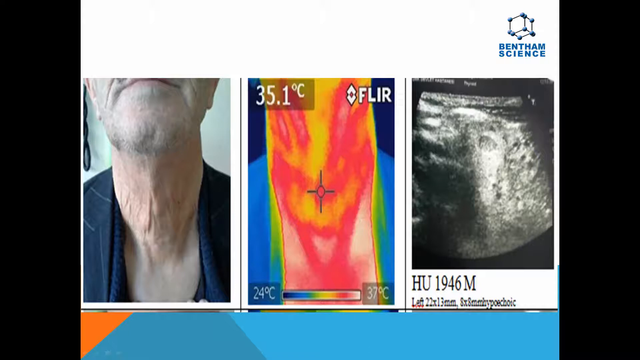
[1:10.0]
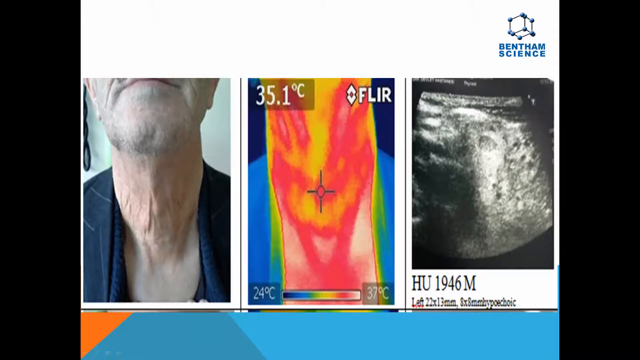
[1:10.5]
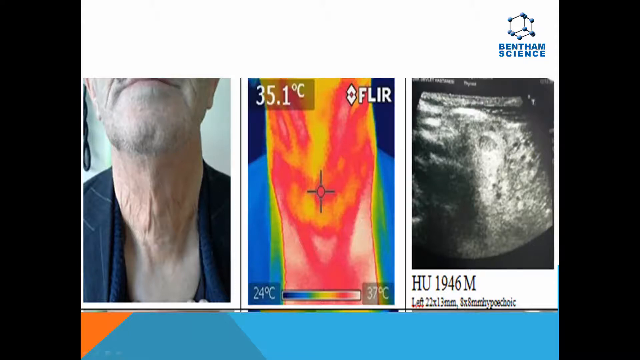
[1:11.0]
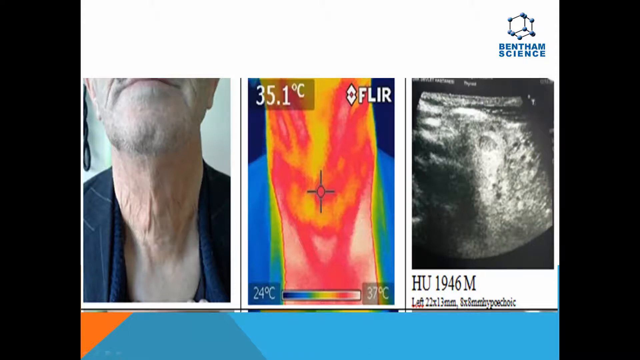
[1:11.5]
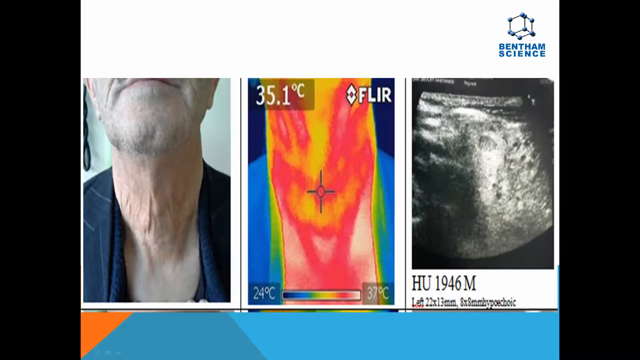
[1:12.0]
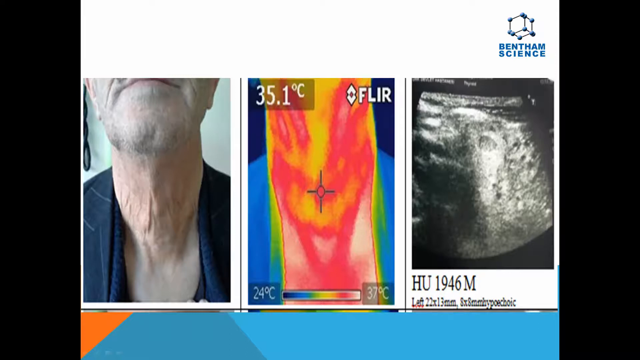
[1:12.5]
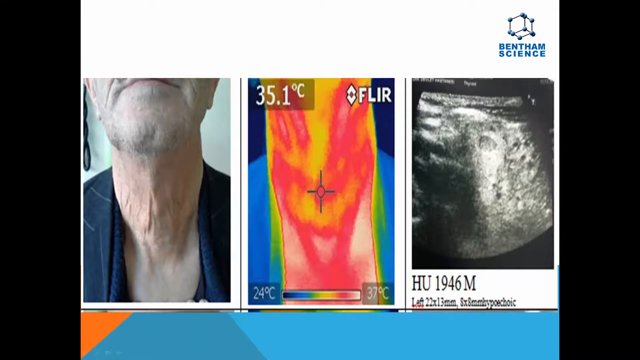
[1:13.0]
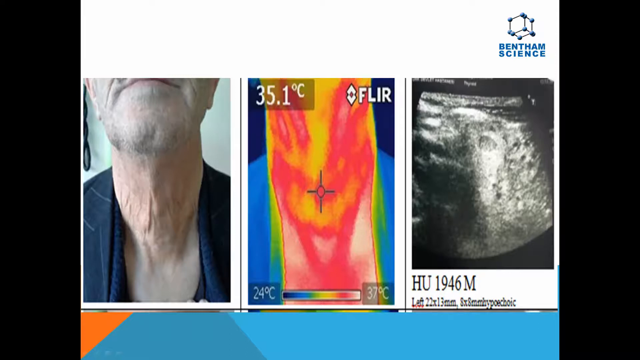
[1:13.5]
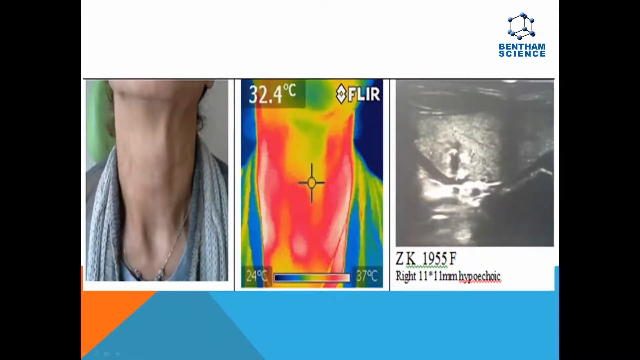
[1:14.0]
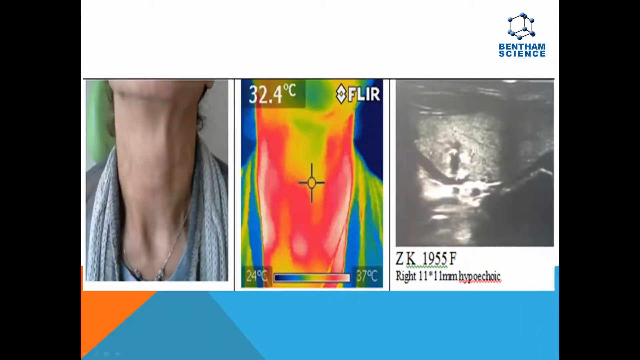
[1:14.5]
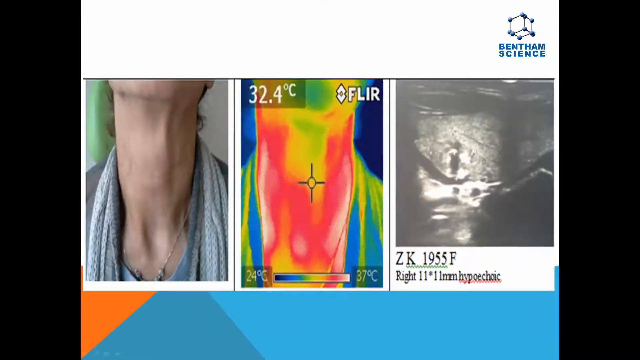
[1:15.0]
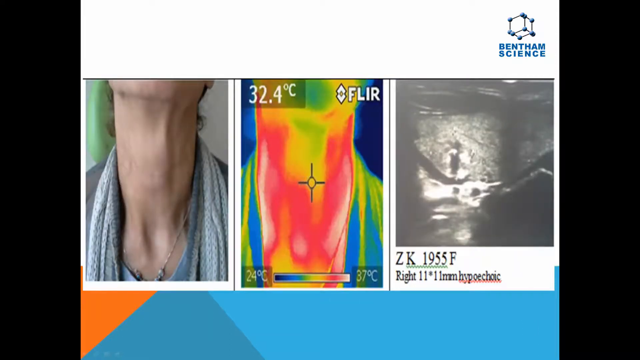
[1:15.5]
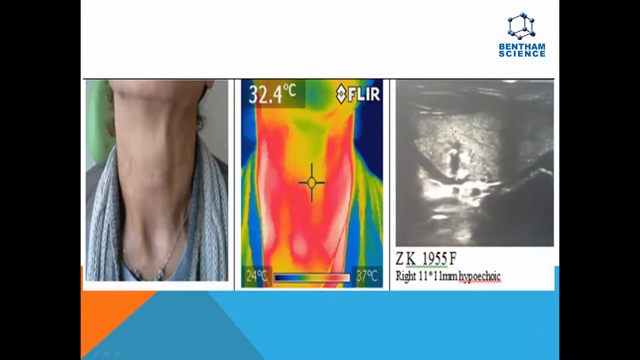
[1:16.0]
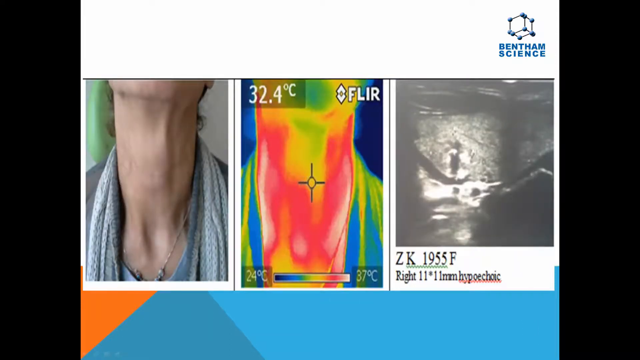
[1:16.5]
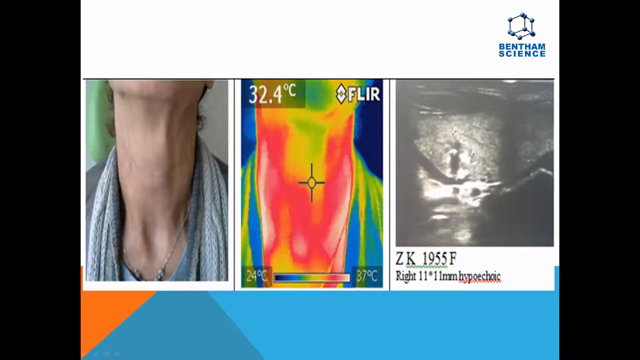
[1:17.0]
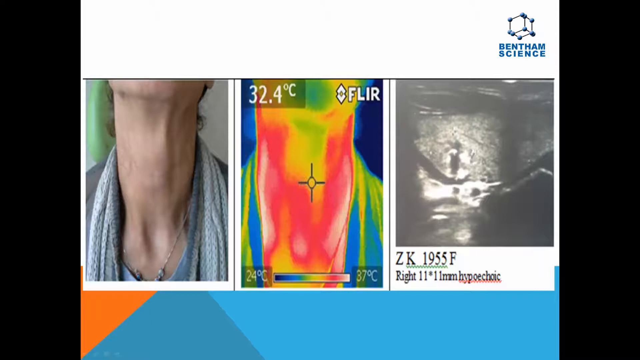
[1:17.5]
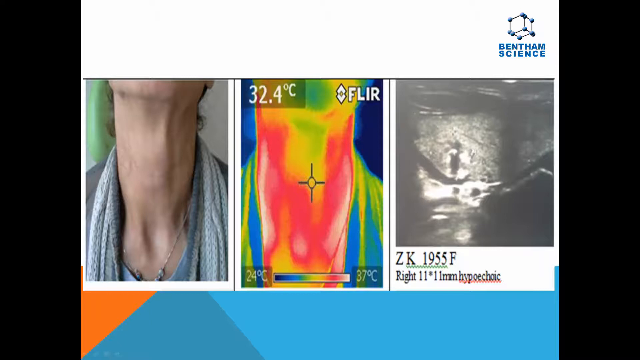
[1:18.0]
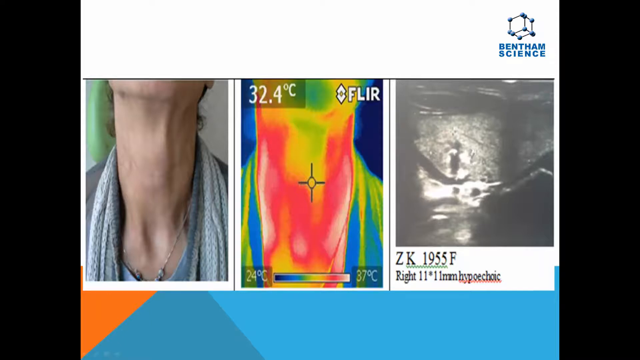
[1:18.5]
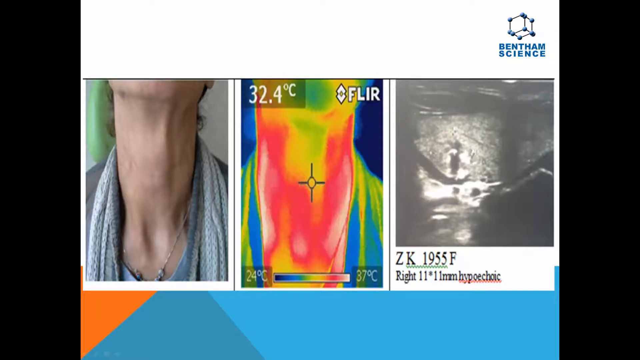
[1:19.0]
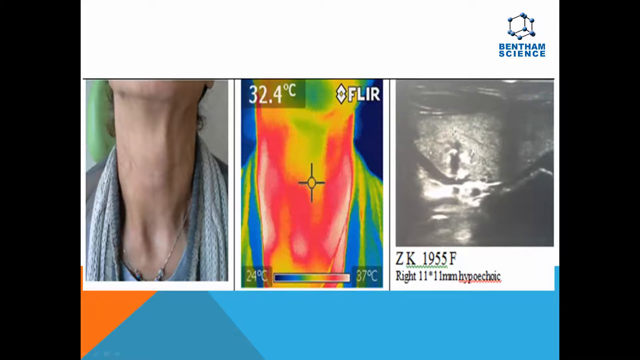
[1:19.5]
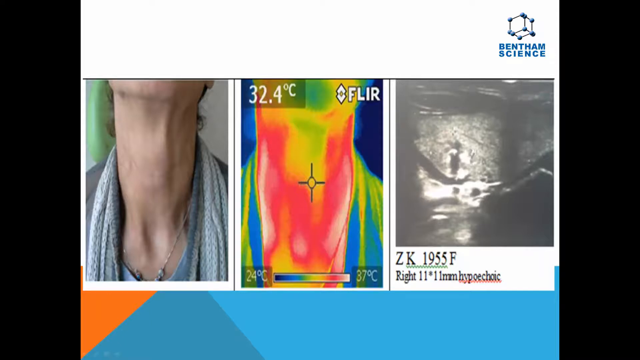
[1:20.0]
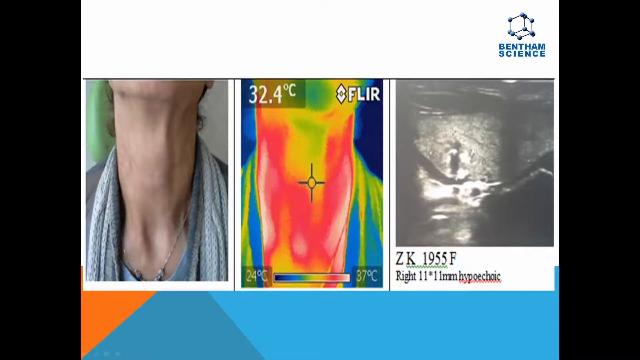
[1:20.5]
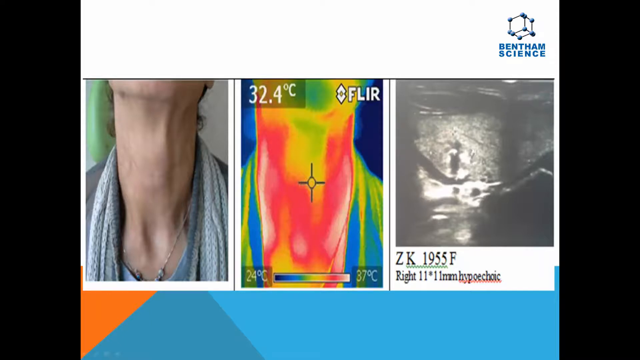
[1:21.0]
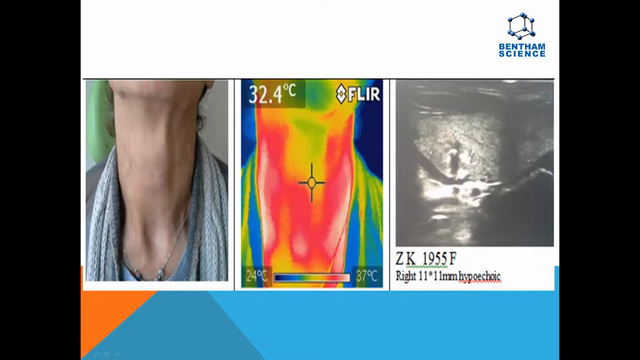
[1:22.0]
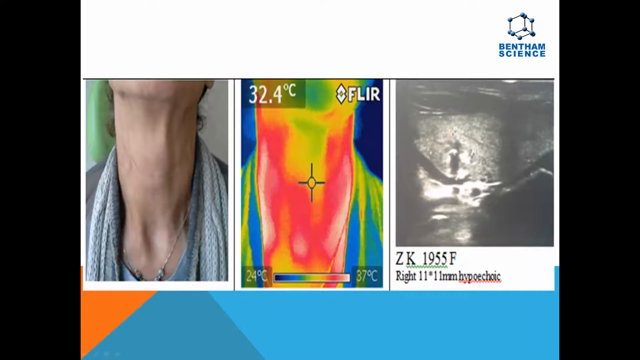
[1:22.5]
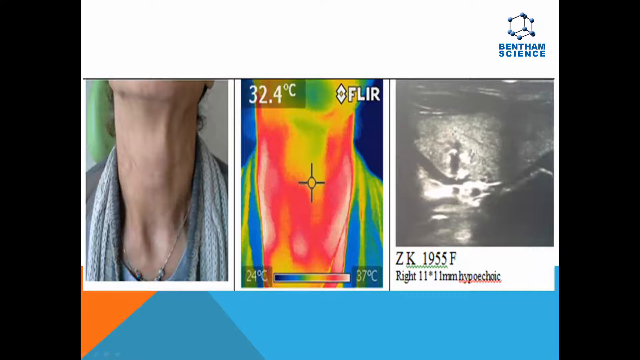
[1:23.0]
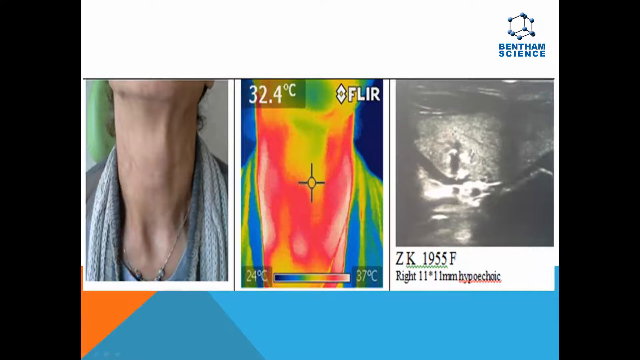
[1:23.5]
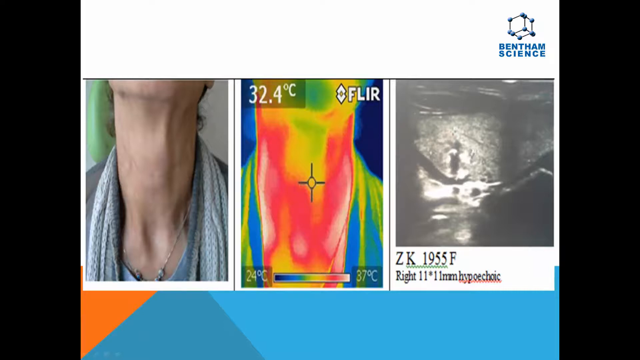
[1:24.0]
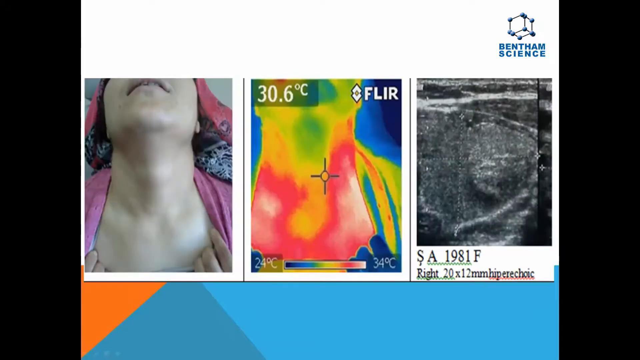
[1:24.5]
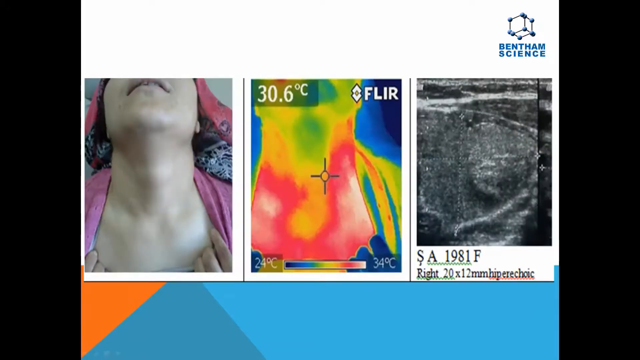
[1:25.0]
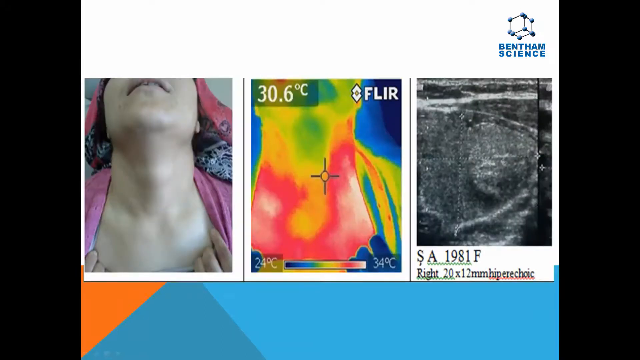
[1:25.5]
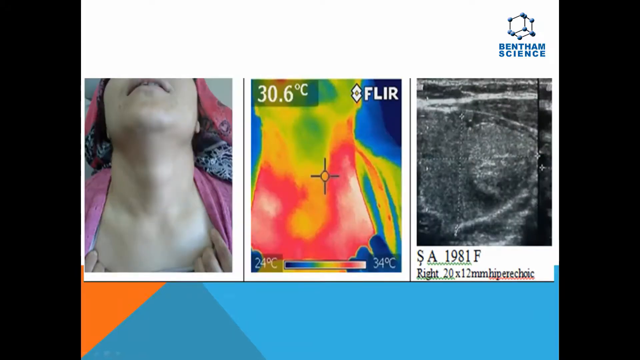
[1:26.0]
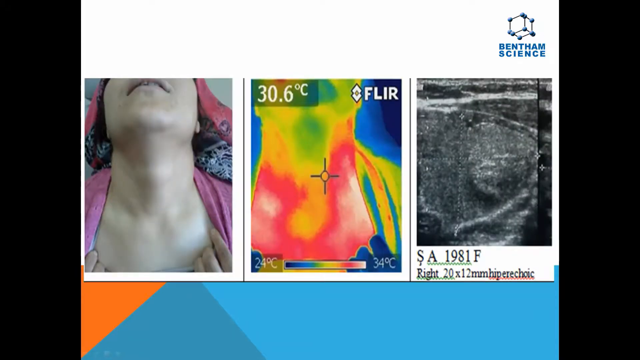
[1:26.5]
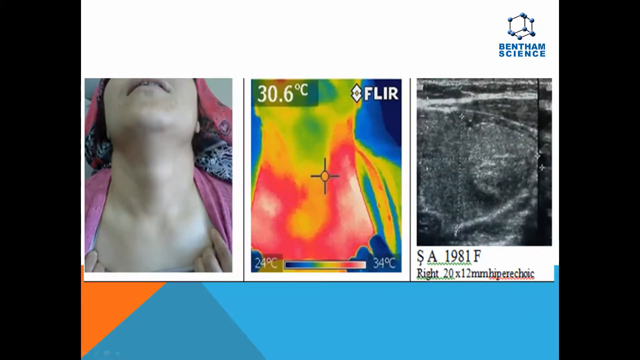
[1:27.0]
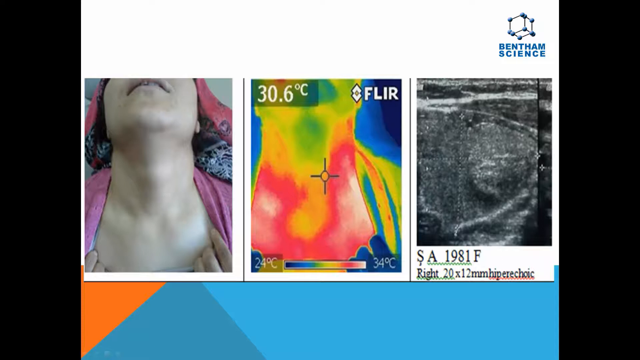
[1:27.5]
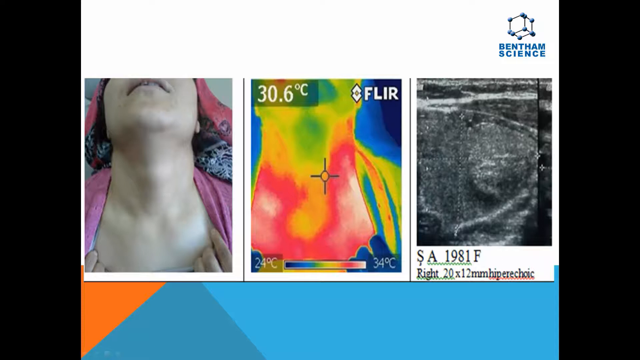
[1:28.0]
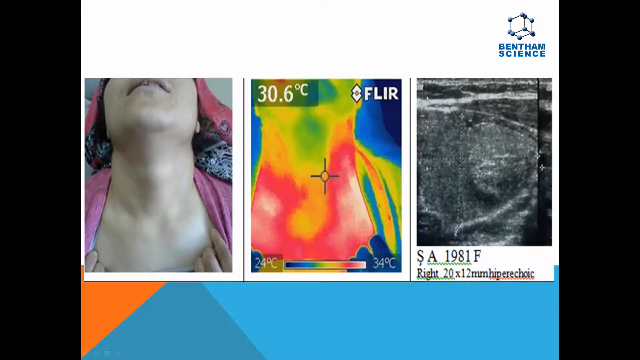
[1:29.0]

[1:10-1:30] Three side-by-side pictures show a man from his lips down to his upper chest, wearing a black suit jacket, with his neck in the center of the photo; to the right is an infrared version of the left picture, and further right a hazy black and white sonogram of the same view. In the upper right of the screen is a 3D cube with little balls on each corner, above the words "Bentham Science". The pictures are on a white background above a mostly blue rectangle at the bottom of the screen with a little orange on its left side. The video then transitions to a different shot of a woman: a picture of her beside an infrared picture and a sonogram of her. On the left, the woman is seen from the chin down, holding her chin in the air. She wears a gray scarf around her neck, a silver necklace around her neck and a low-cut gray shirt, and her neck is the focus of the picture. To the right, in the infrared version, her neck is mostly red with a little yellow, and her clothing is a mixture of blue and yellow. Further right is a hazy sonogram version of the two pictures. After a few seconds, another series of pictures shows another woman. On the left she is seen from the lips down to her upper chest, wearing a pink shirt around her neck, and she seems to be covering her eyes with a red piece of cloth. The upper tips of her fingers are visible, holding and pulling away her shirt to reveal her neck and upper clavicle. To the right, in the infrared version, her neck is mostly yellow and red and the clothing around her is a mixture of blue and yellow; a temperature bar graph at the bottom of this picture runs from 24 C to 34 C, blue on the left and red on the right. To the right is a grainy, hazy black and white sonogram meant to be of the same view.